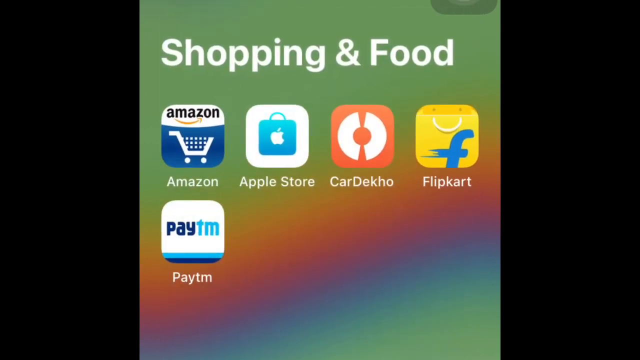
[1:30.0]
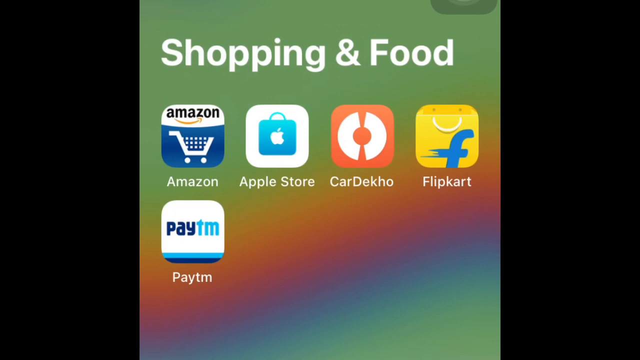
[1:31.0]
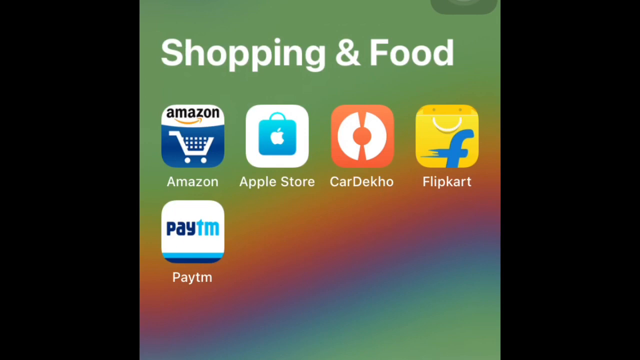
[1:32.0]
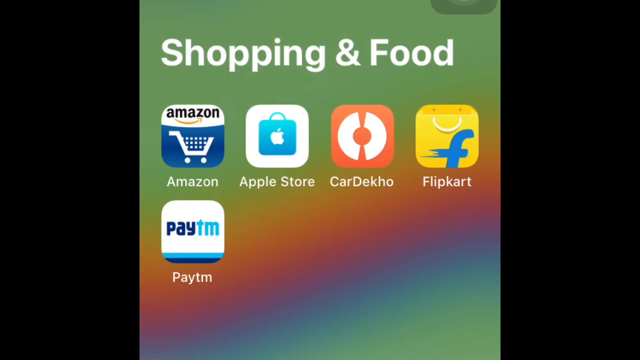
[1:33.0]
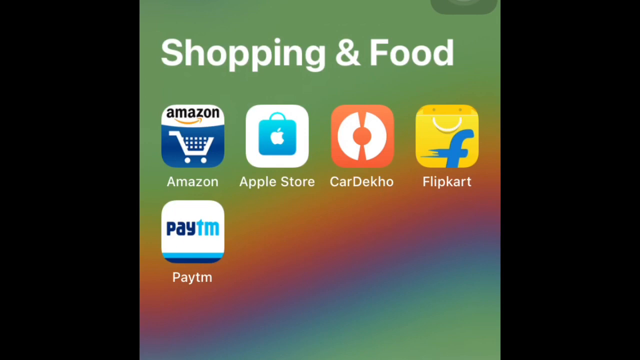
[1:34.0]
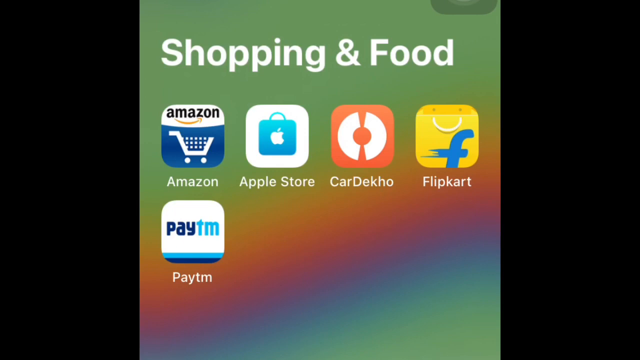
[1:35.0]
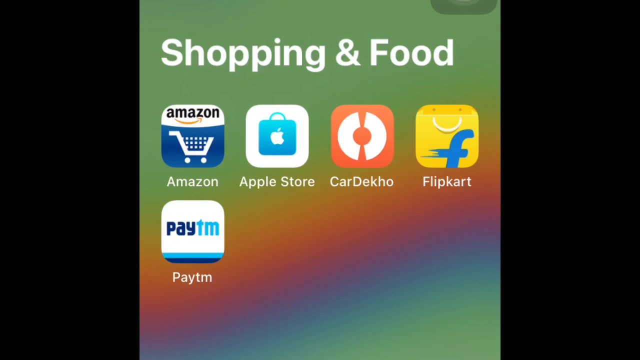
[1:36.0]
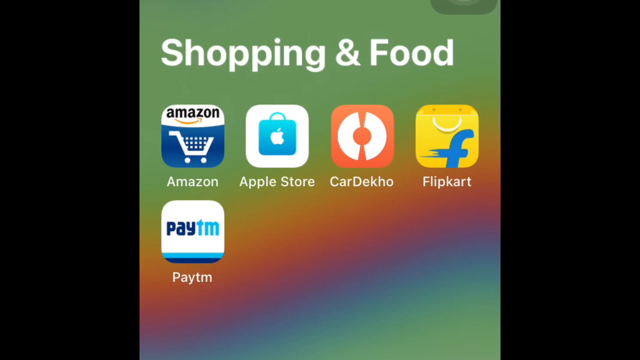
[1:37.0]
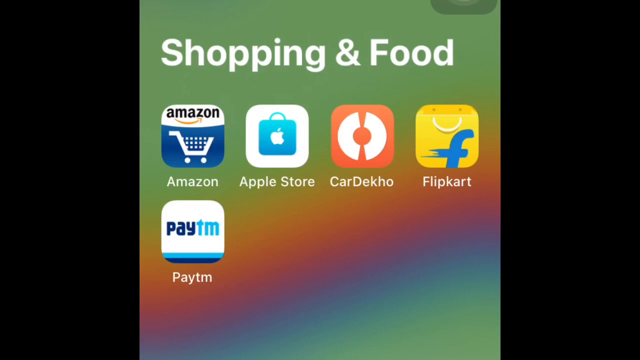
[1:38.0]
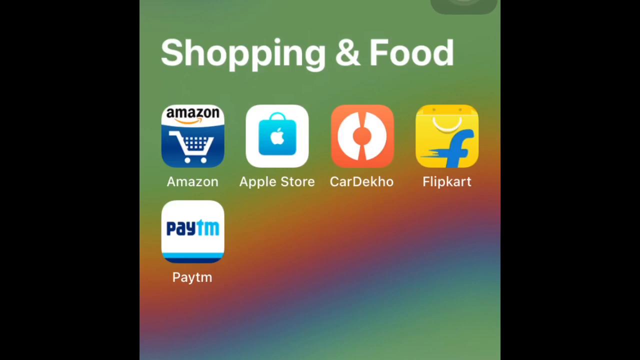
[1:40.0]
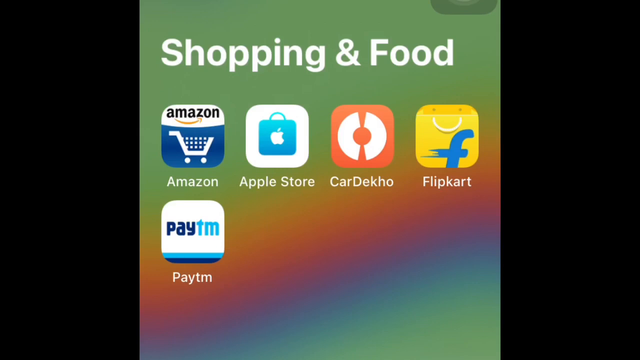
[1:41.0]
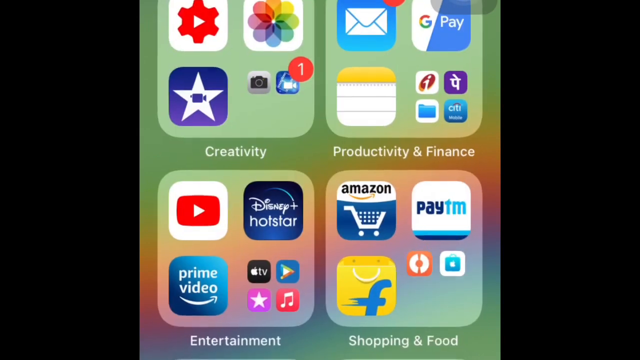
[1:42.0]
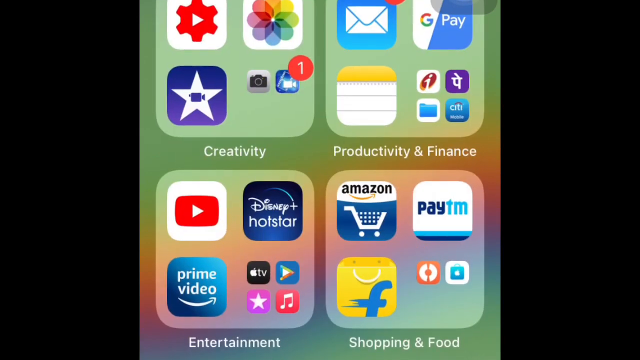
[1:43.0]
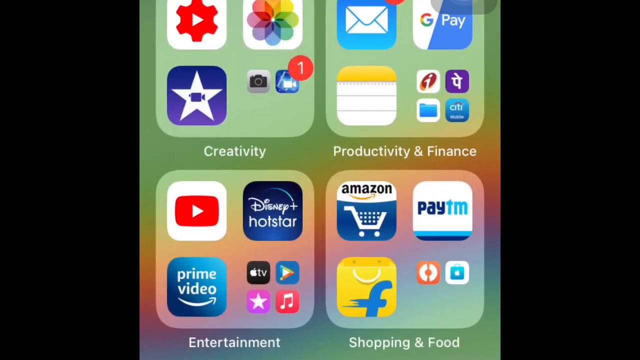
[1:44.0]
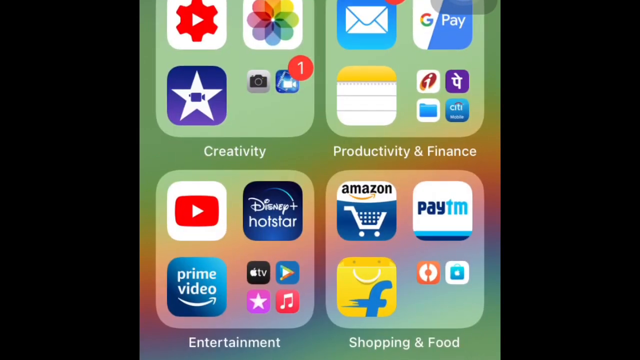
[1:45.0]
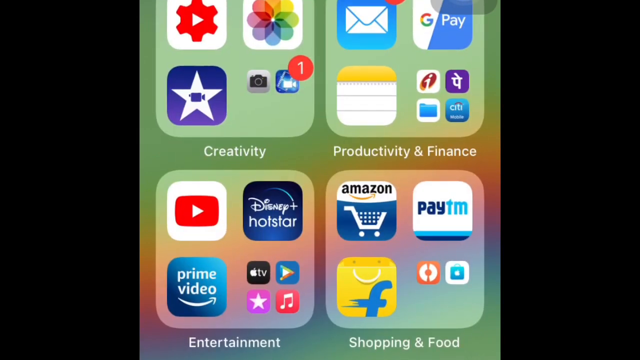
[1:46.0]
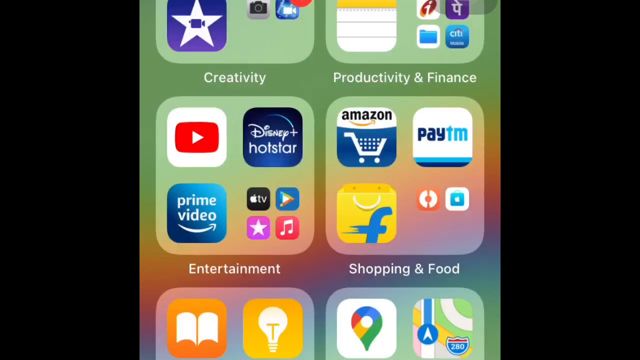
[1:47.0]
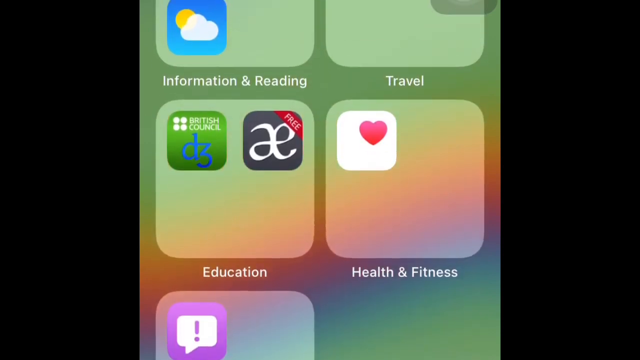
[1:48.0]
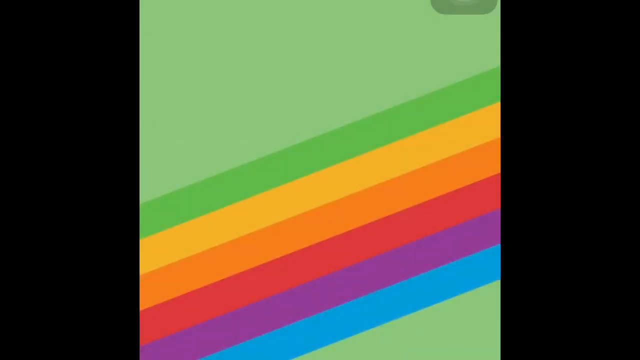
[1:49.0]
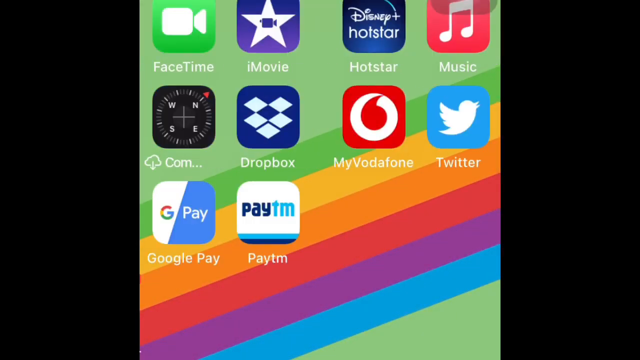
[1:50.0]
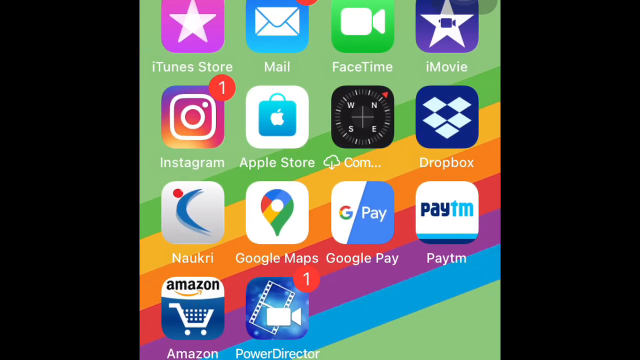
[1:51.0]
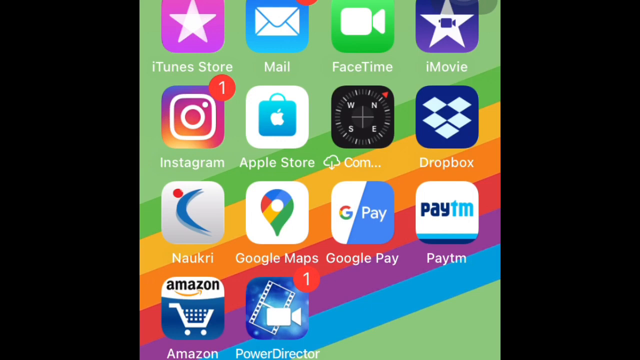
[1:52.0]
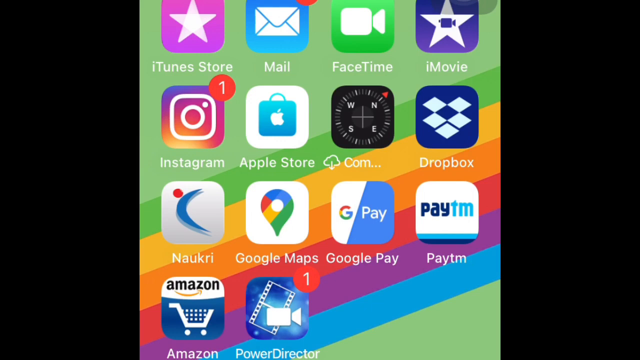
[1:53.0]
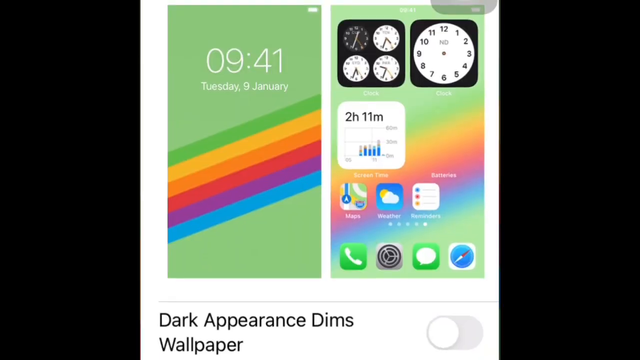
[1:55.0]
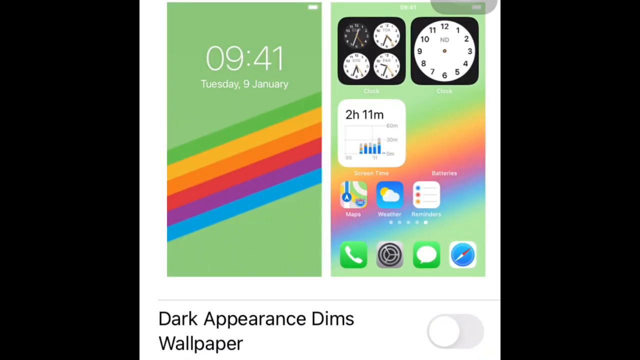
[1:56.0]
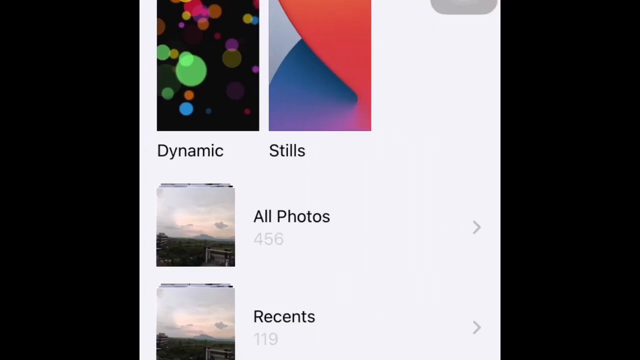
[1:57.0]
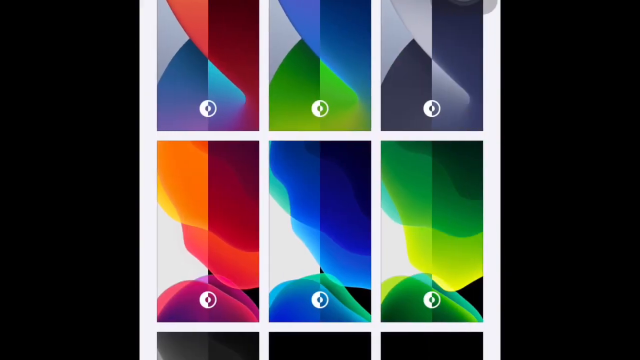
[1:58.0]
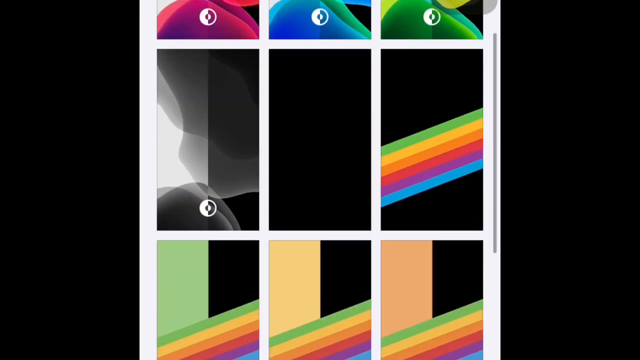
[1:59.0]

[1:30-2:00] The shopping and food section is open, with Amazon, Apple Store, Cartdekho and Flip Cart in the top row and Paytm underneath Amazon. It closes back into the section, and the view scrolls back to the left in two swipes to the home page, with iTunes, Mail, FaceTime and iMovie in the top row, followed by Instagram, Apple Store, Calm, Dropbox, Nucri, Google Maps, Google Play, Paytm, Amazon and a movie app. A different screen then opens where the background can be changed, and it scrolls through different wallpapers. At first, a rectangle on the left and one on the right show the current wallpaper. It scrolls to the right, showing one at the top that looks like a lava lamp, with "dynamic" underneath it, then "stills", and below that "all photos" and "recents". It scrolls further right to wallpapers three across and scrolls down through them.